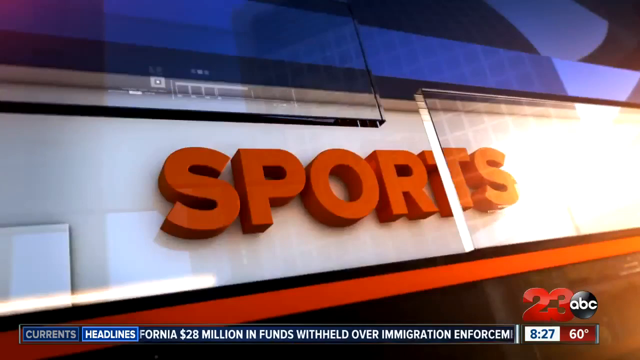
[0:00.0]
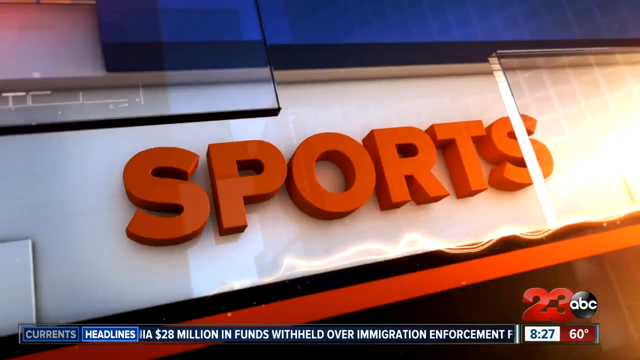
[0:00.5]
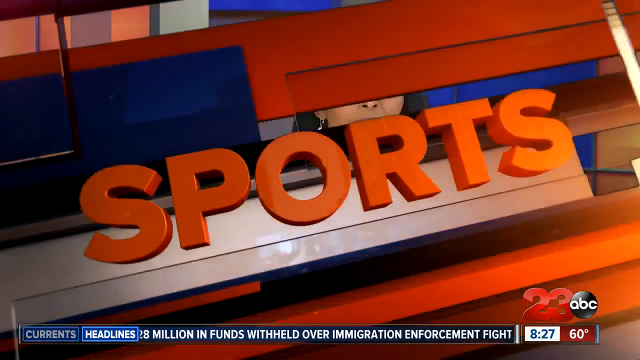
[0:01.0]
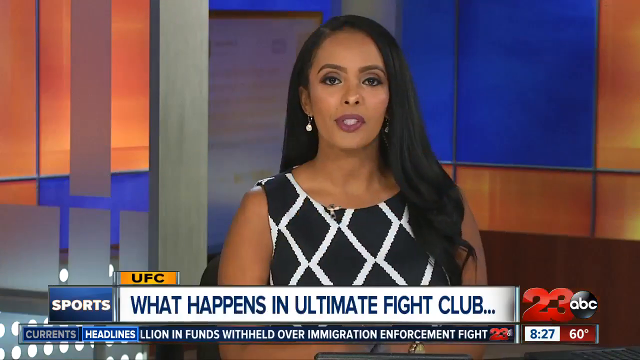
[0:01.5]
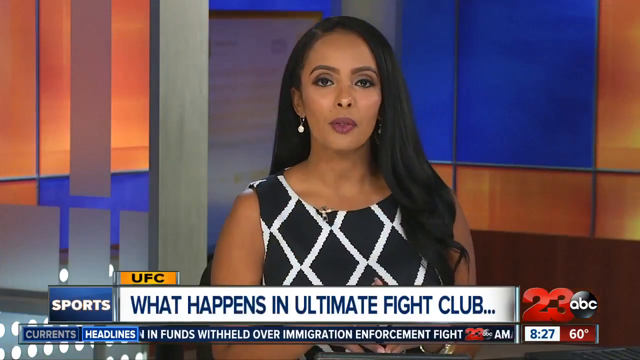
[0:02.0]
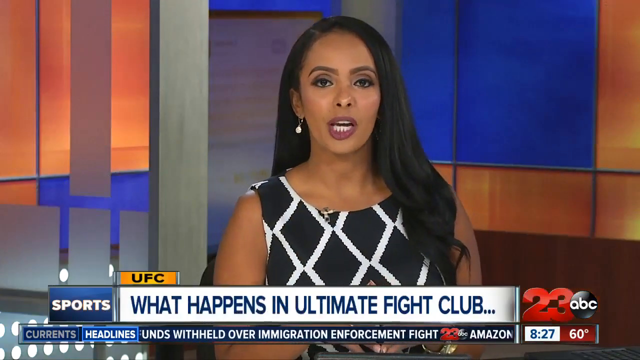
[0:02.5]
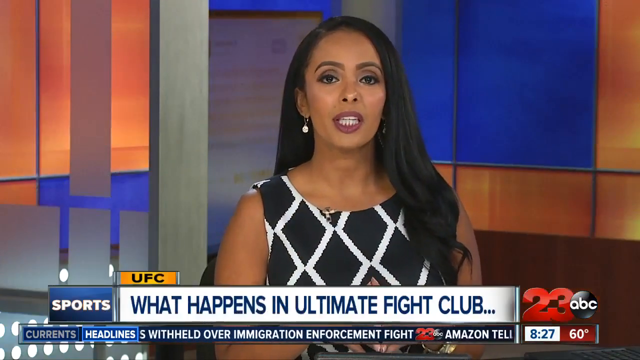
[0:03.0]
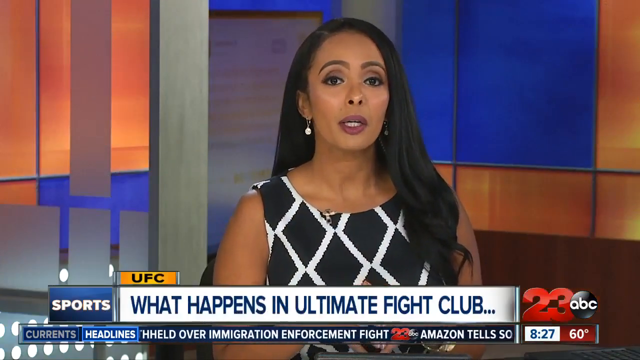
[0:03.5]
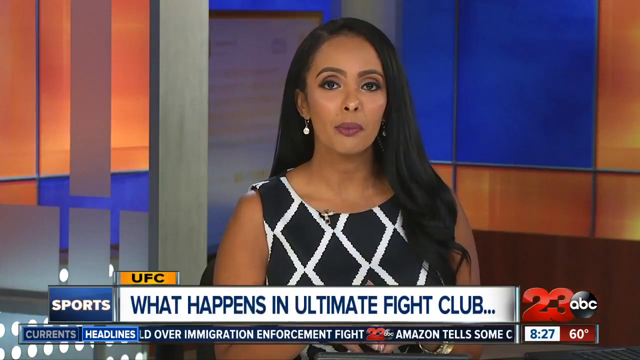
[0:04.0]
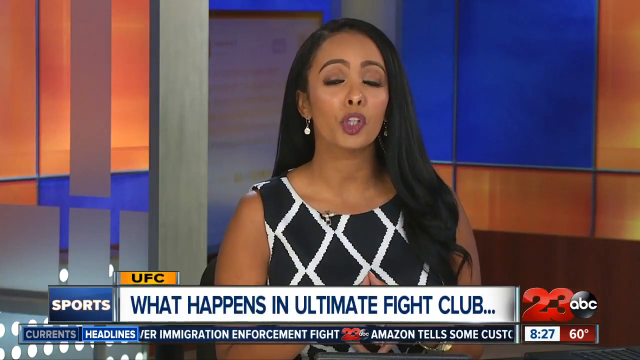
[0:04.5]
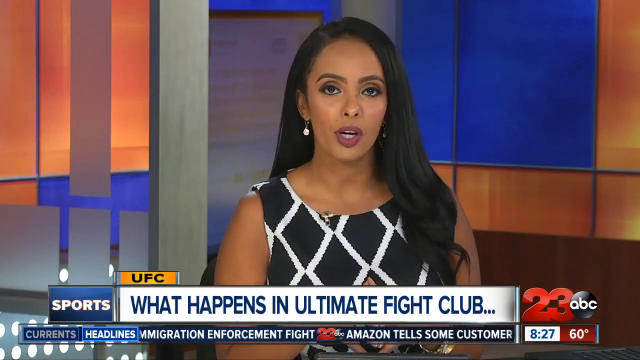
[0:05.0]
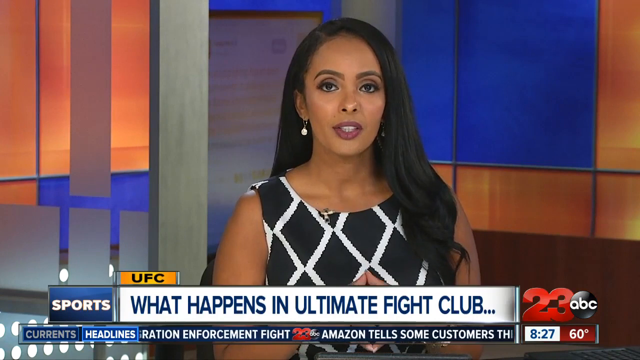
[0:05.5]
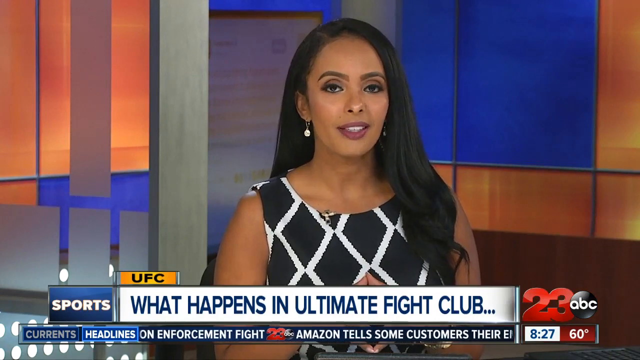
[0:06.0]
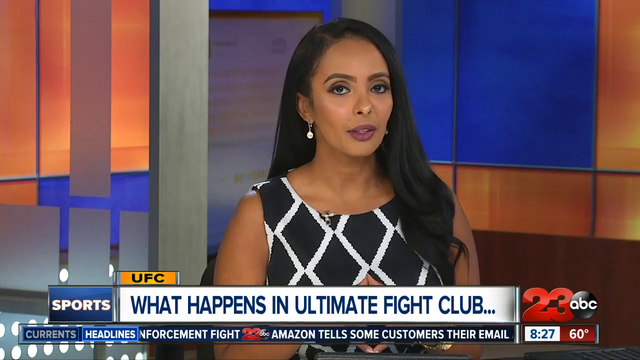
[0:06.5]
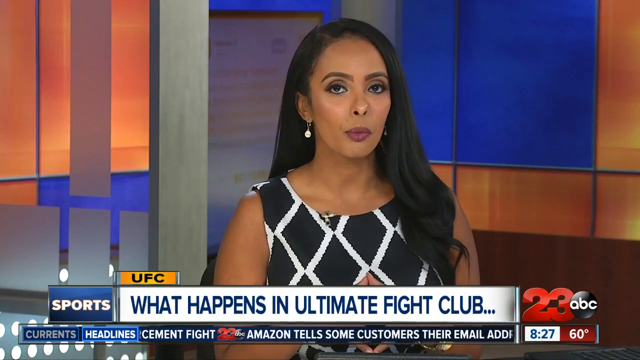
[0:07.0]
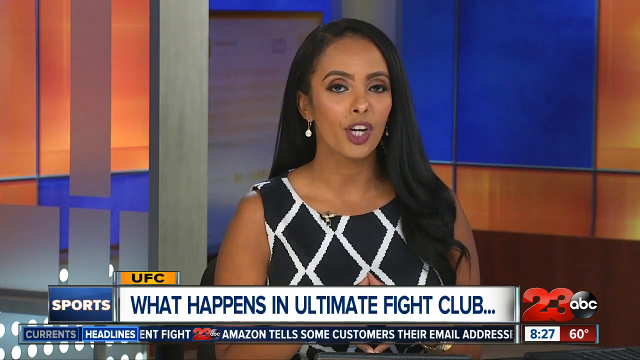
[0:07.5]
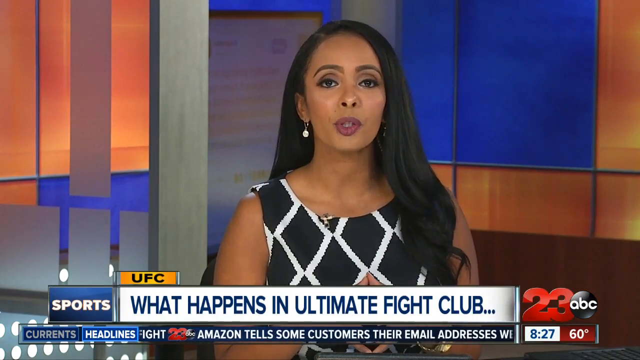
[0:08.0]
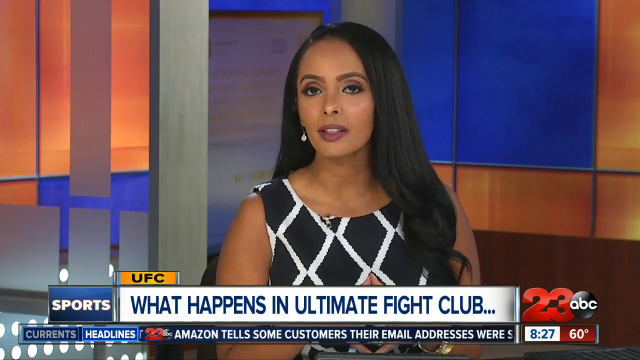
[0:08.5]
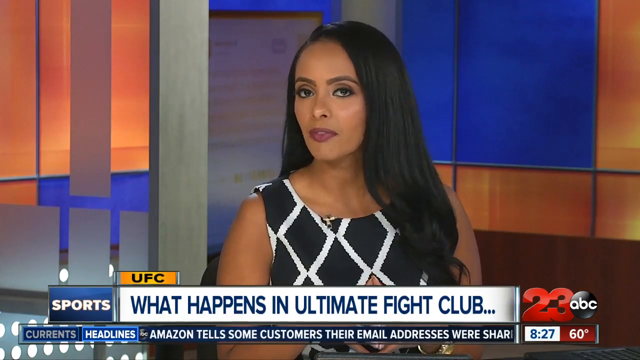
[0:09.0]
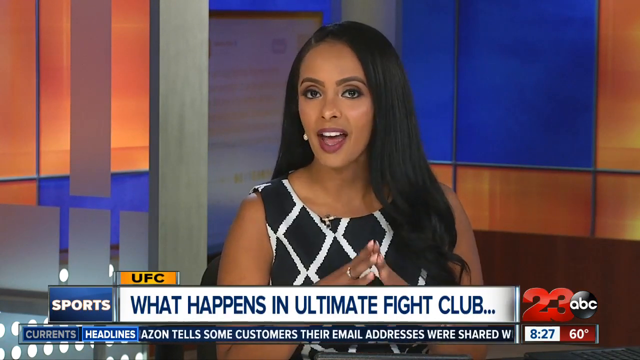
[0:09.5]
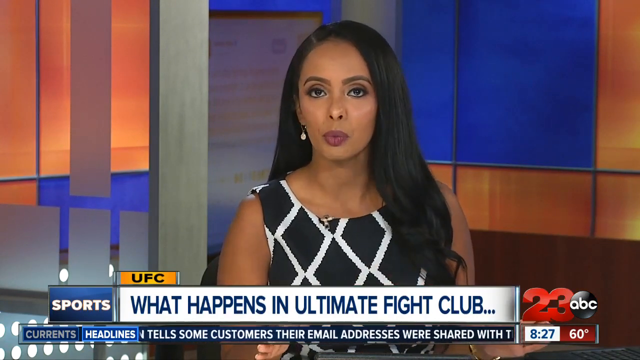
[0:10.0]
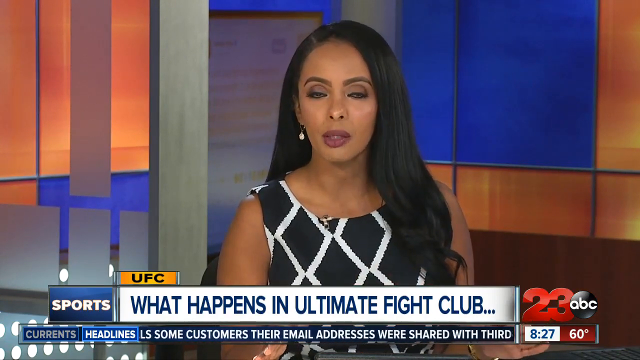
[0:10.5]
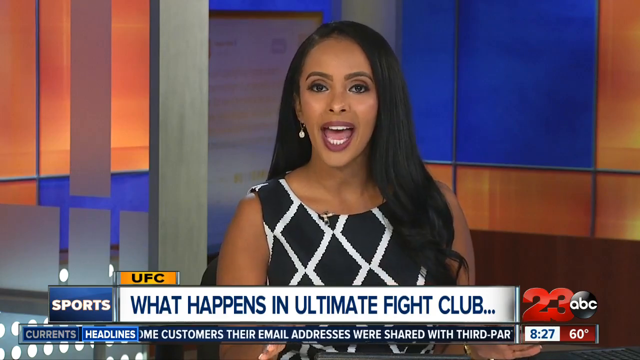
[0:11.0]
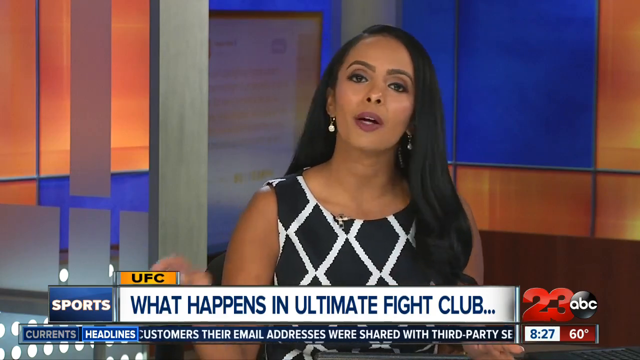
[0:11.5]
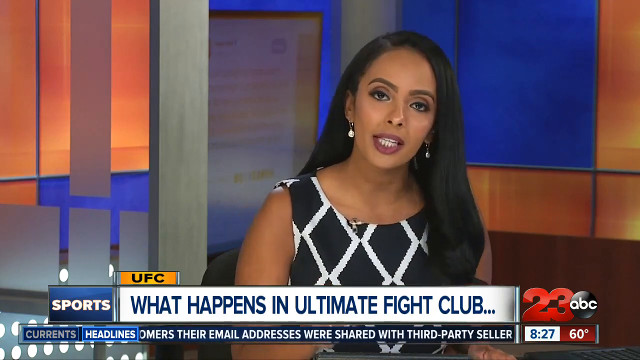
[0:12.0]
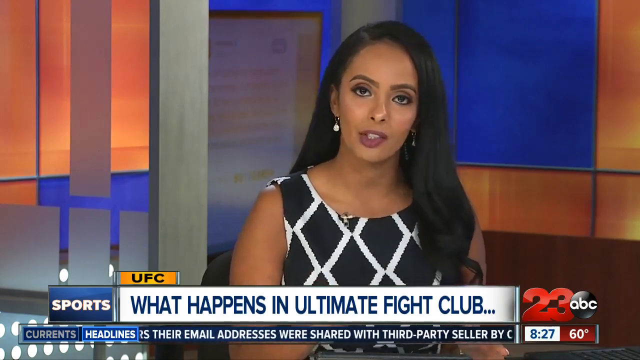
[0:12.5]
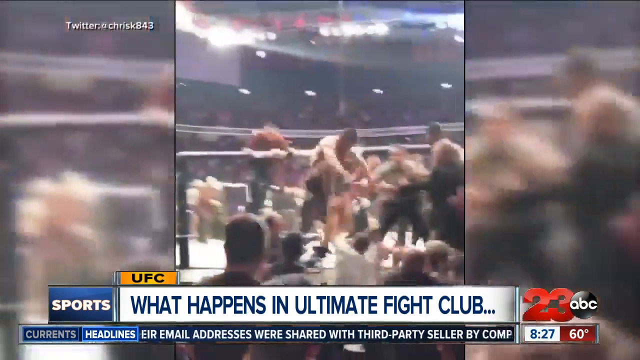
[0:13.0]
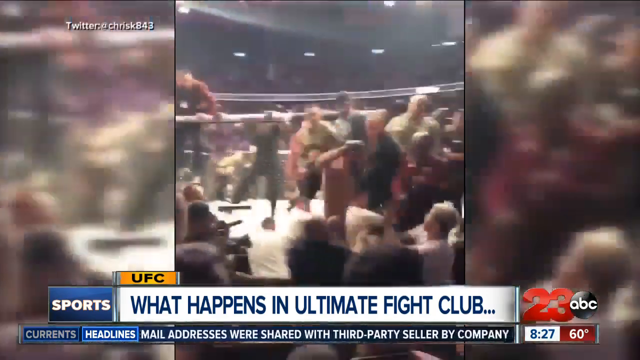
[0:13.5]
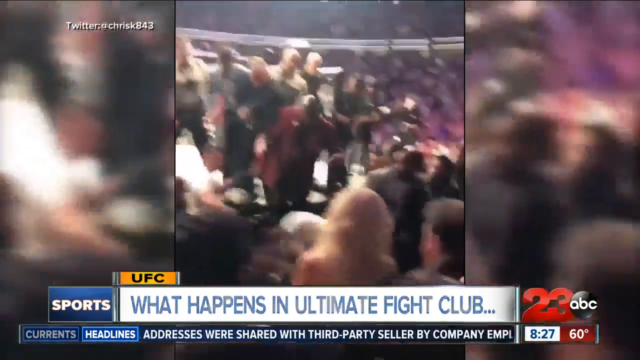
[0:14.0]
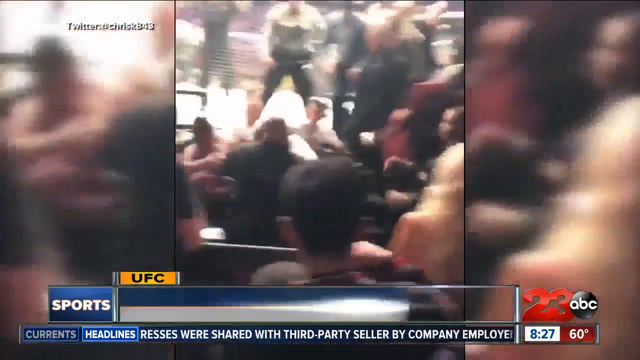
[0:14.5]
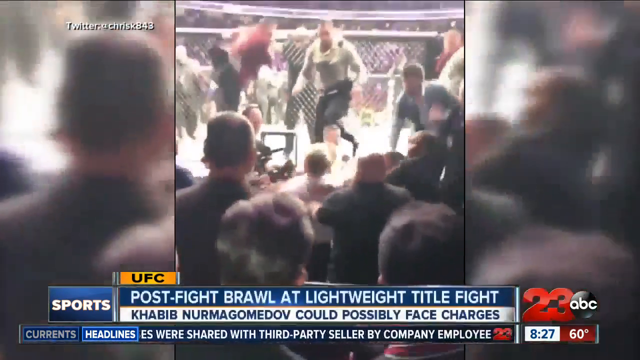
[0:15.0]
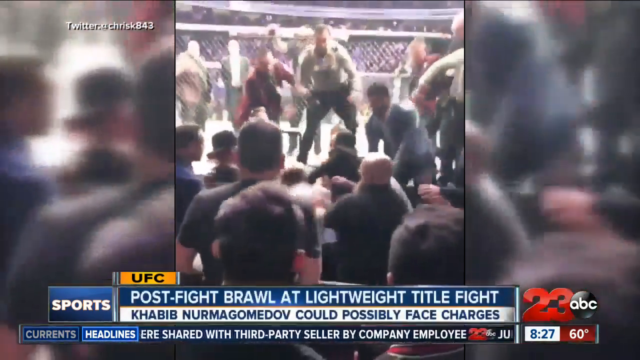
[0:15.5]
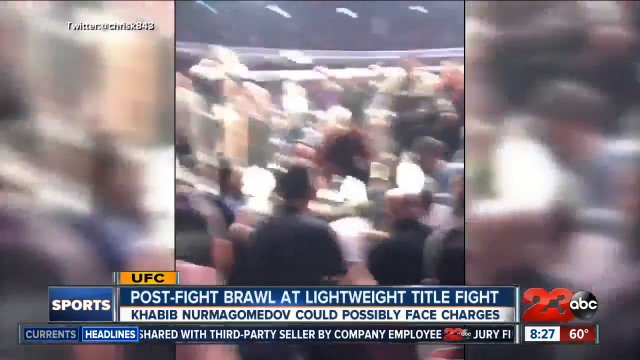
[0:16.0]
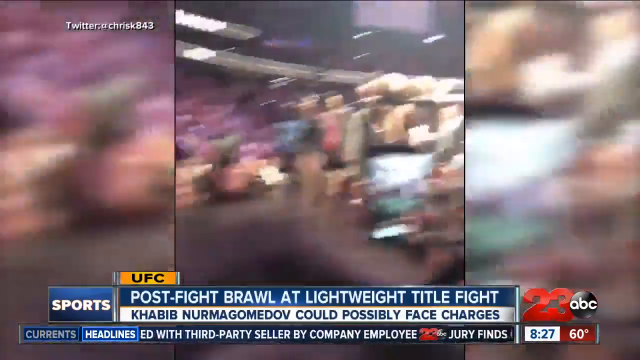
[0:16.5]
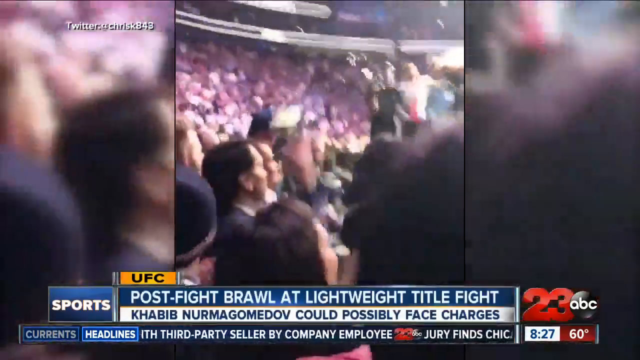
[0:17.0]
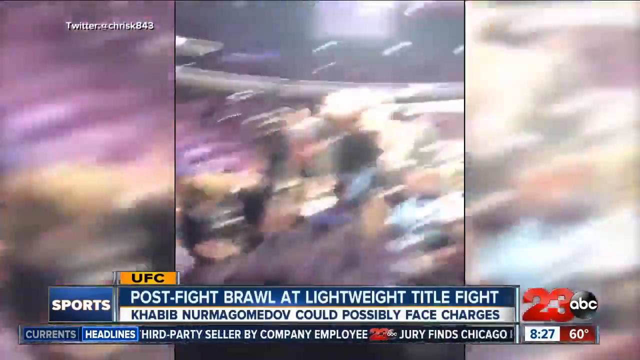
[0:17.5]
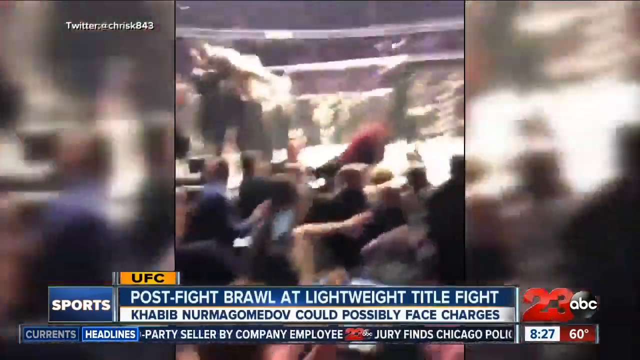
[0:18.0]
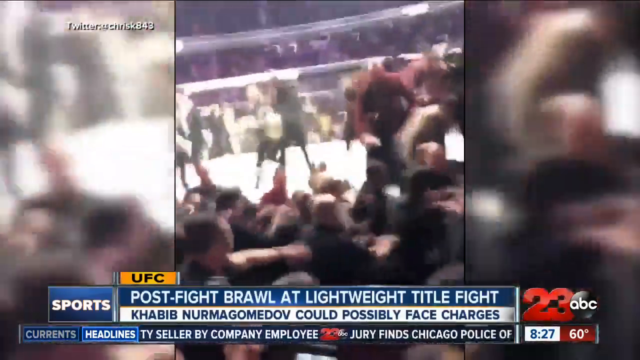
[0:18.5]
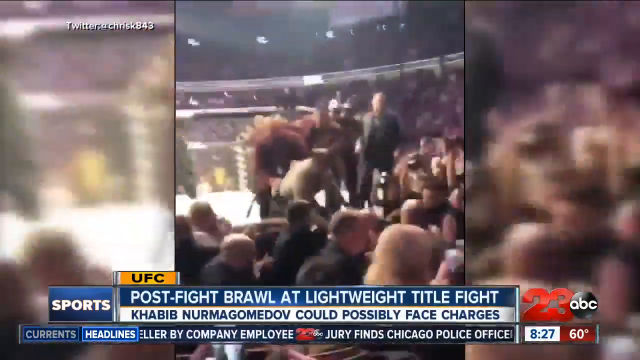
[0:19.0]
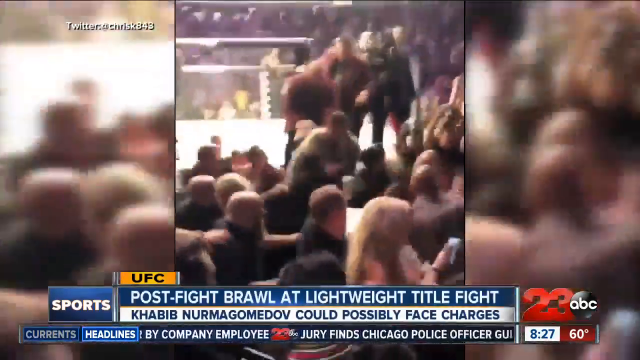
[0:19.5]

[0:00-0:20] A dark-skinned woman with nice hair and earrings, wearing a black and white dress, appears on screen. "UFC" is shown on a yellow box. Footage follows of what looks like a brawl breaking out at a UFC event and spreading into the stands, with people apparently fighting everywhere. The camera is very shaky, making it hard to tell what is going on. The report is from 23 ABC. It looks like people jumped out of the cage and went into the audience, with chaos in the stands.